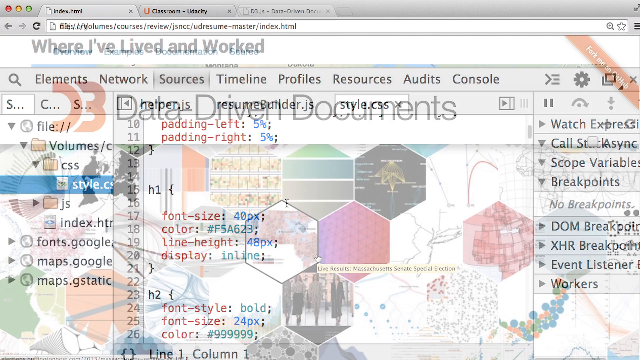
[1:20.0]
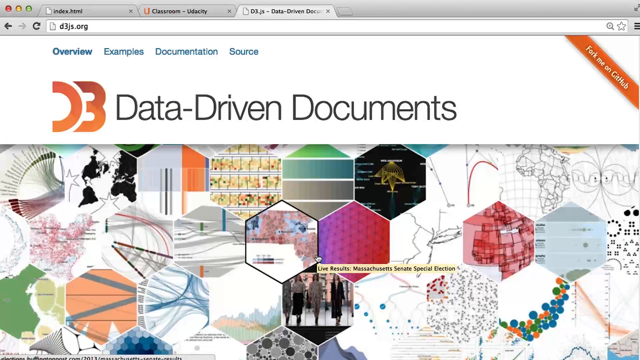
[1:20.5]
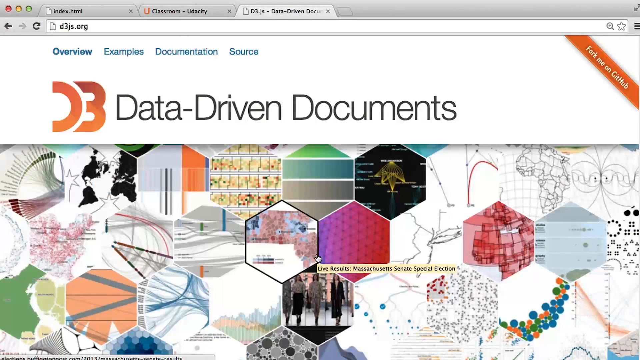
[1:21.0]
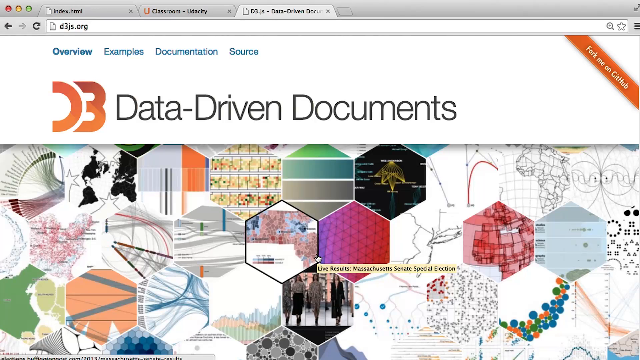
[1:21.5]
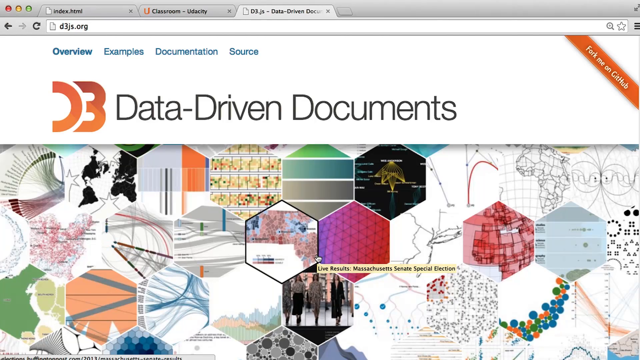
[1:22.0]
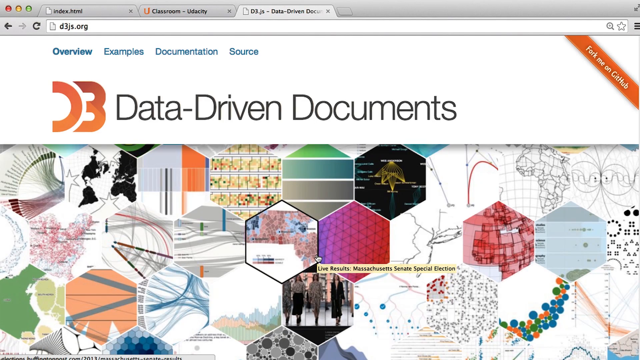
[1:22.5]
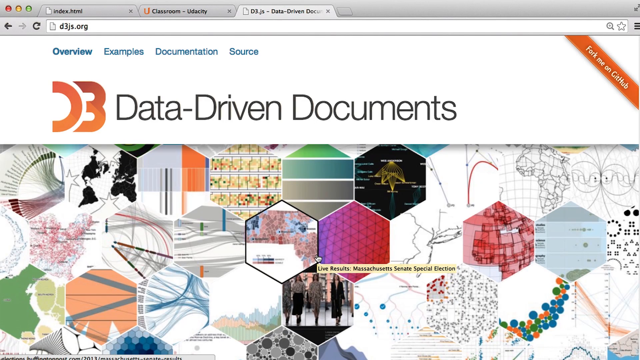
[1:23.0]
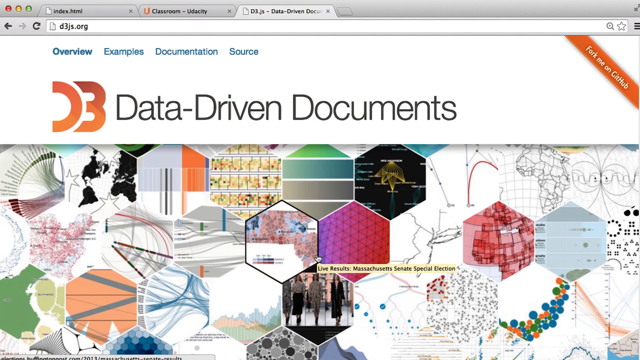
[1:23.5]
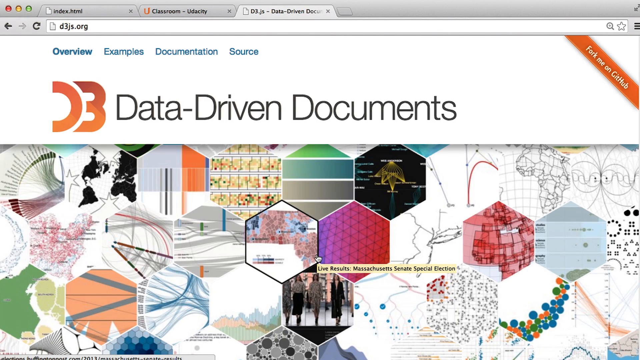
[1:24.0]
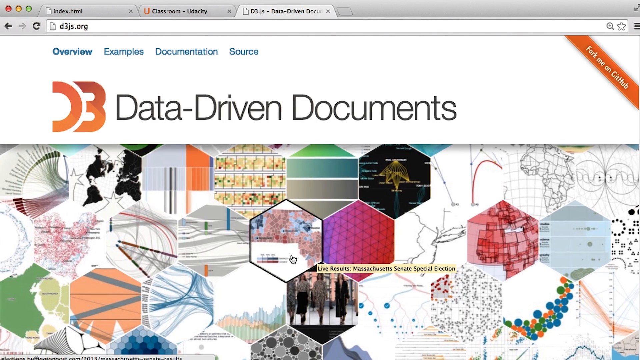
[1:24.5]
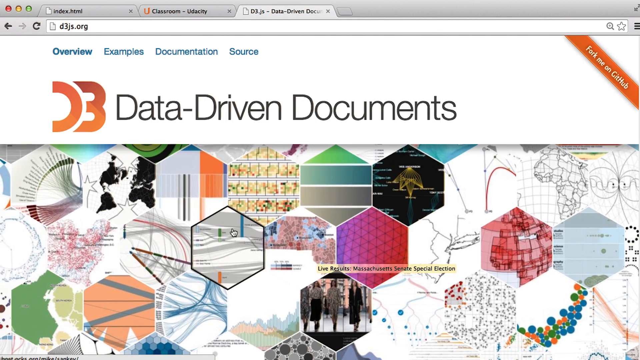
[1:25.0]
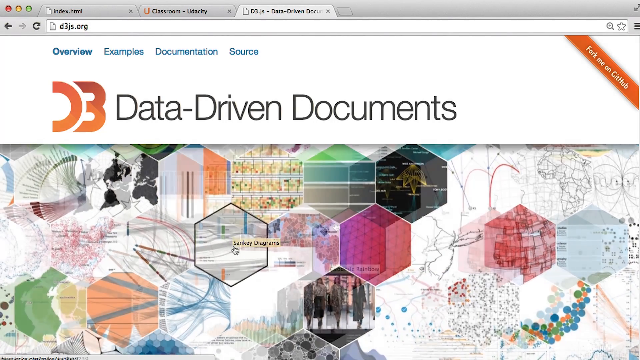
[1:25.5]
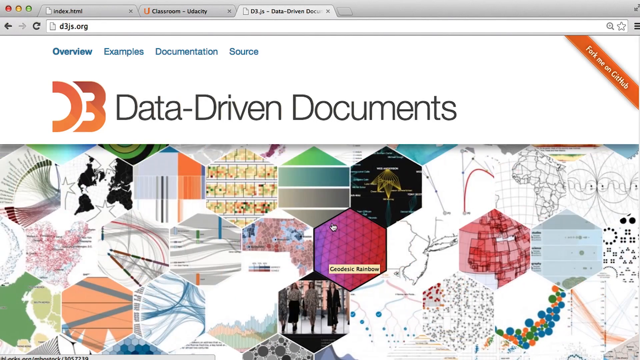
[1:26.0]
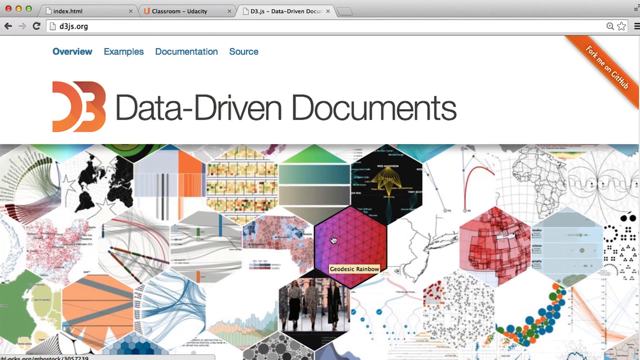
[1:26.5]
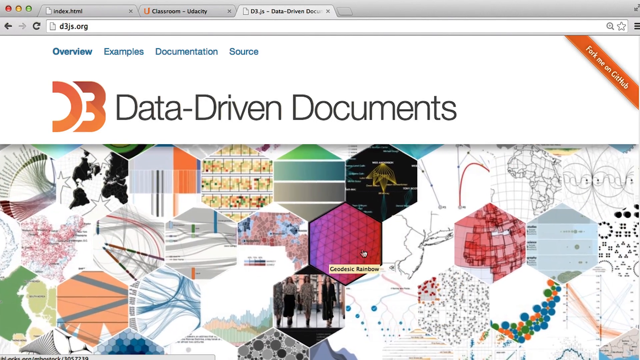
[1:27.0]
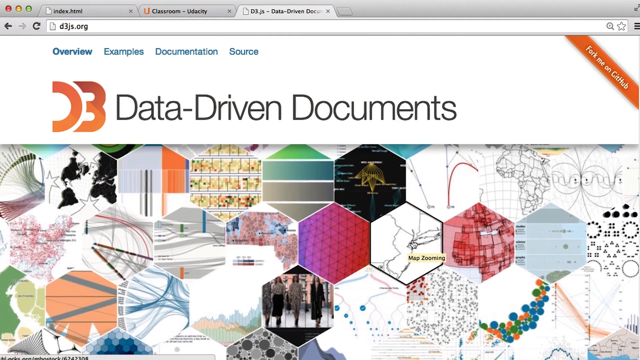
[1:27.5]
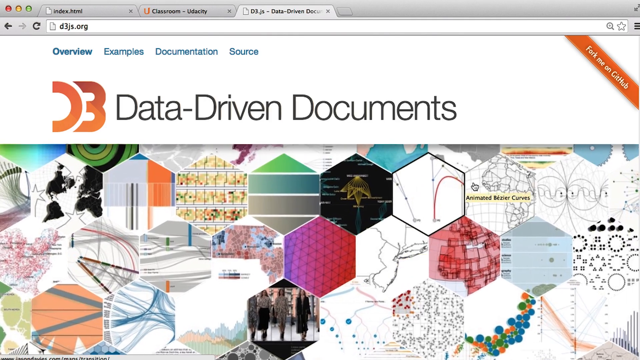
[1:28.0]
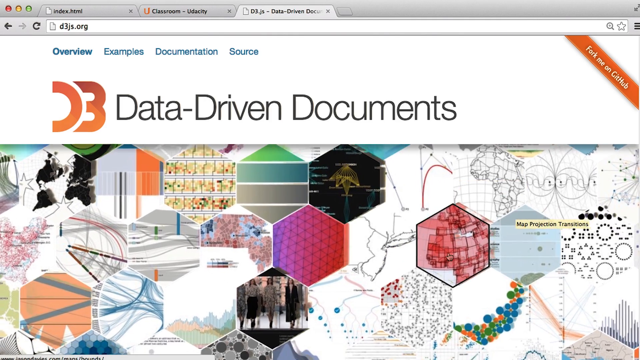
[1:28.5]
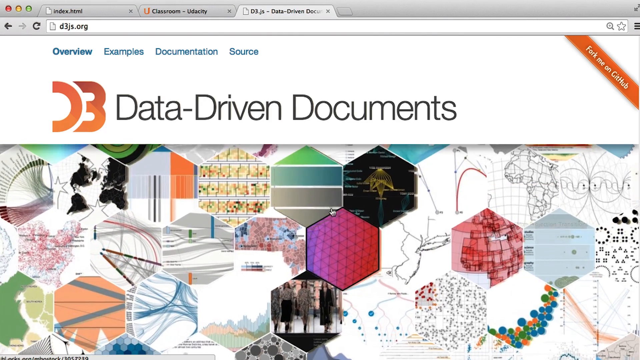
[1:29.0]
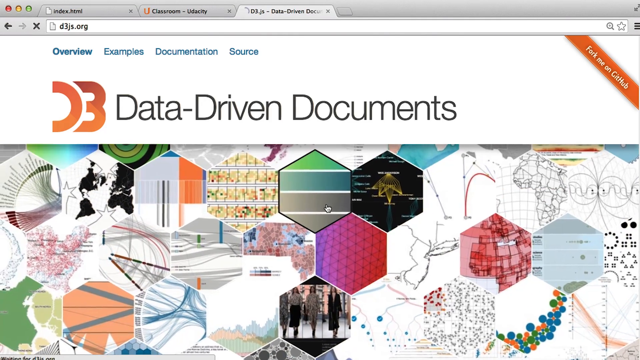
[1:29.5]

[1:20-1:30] A screen reads "data-driven documents", with a colorful image below it full of little shapes that are all the same shape but with different patterns. It appears to be a web page. The mouse moves around on the images, going between each one; as it moves between them they highlight and some information kind of pops up. It goes mostly between the shapes in the very center of the page.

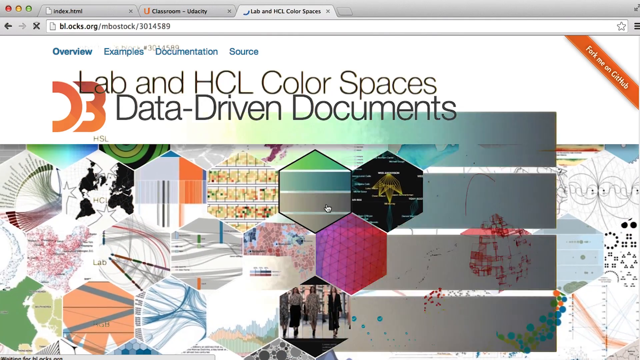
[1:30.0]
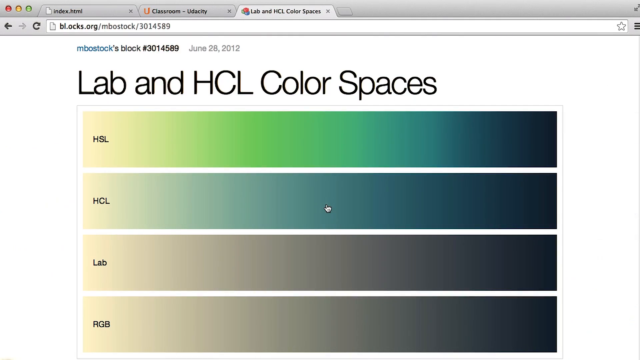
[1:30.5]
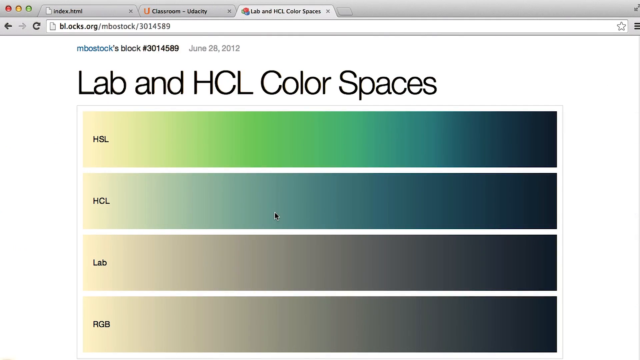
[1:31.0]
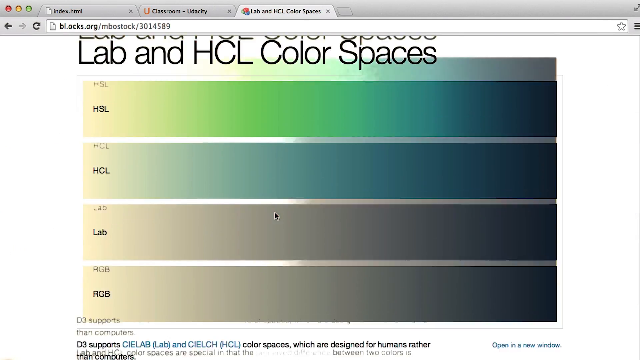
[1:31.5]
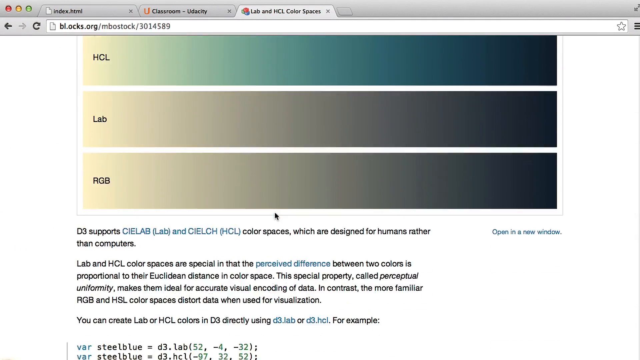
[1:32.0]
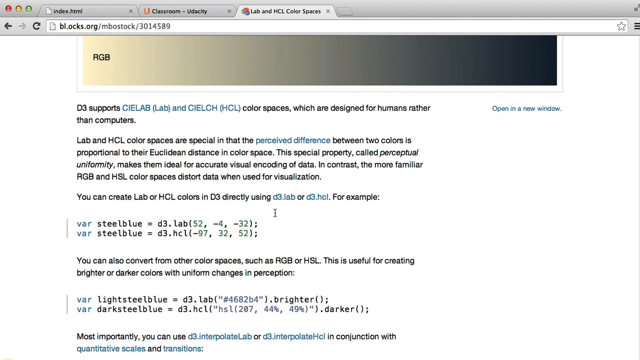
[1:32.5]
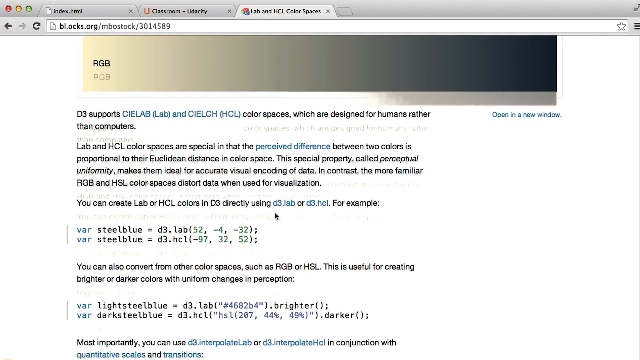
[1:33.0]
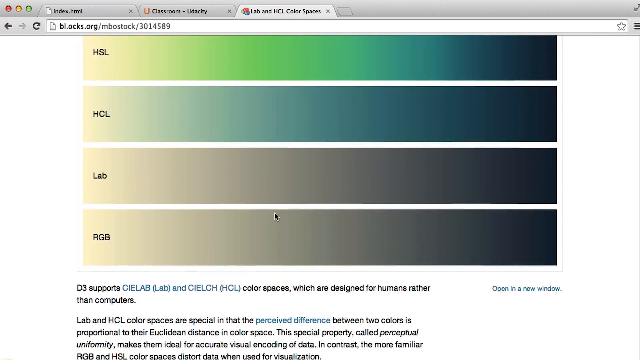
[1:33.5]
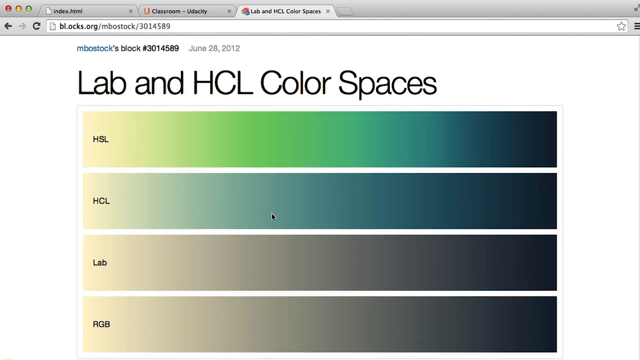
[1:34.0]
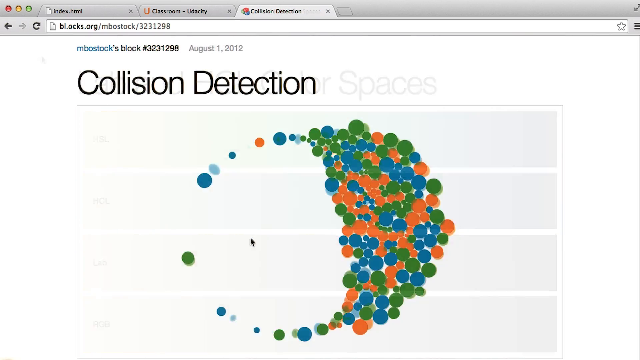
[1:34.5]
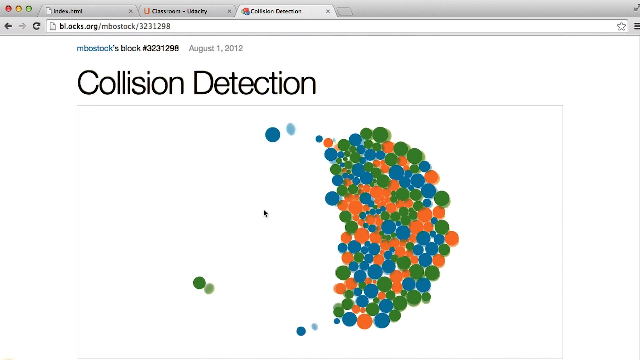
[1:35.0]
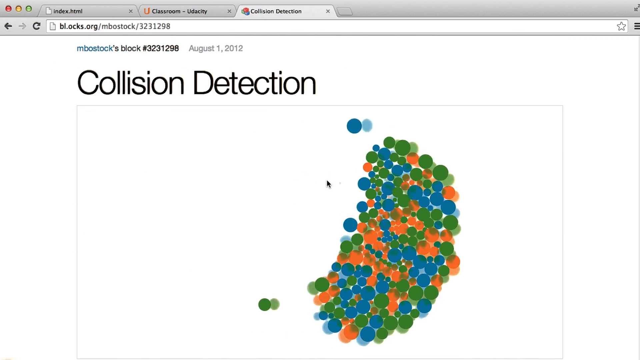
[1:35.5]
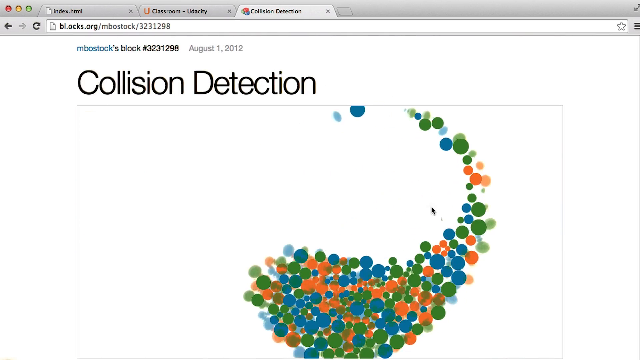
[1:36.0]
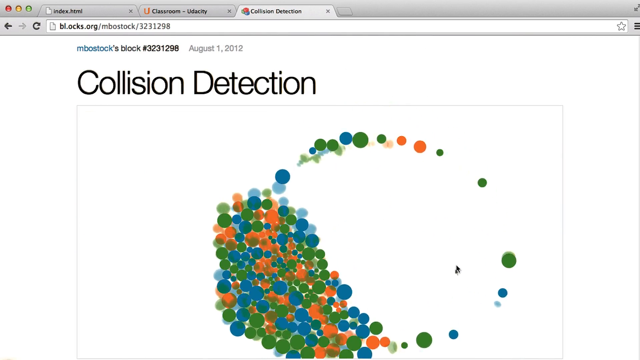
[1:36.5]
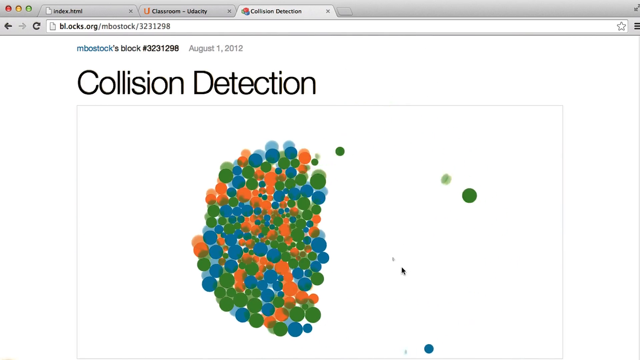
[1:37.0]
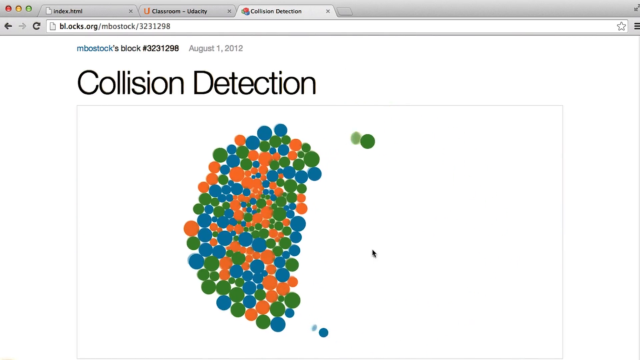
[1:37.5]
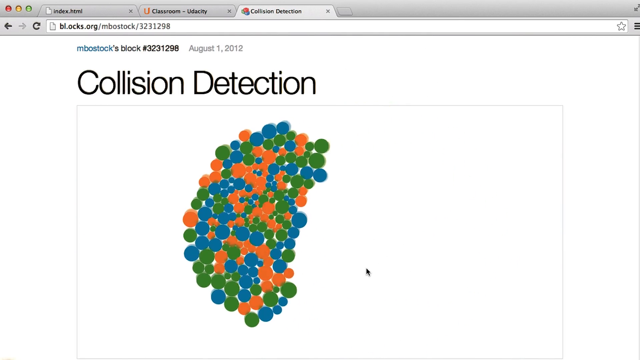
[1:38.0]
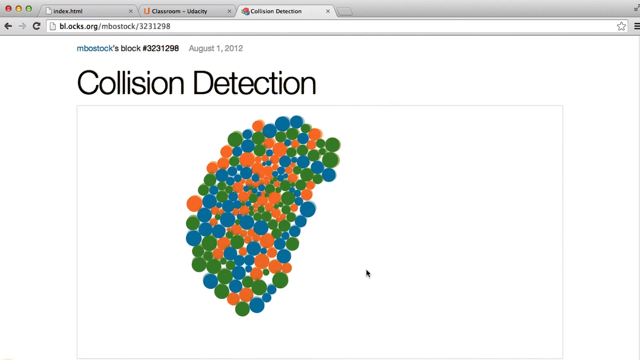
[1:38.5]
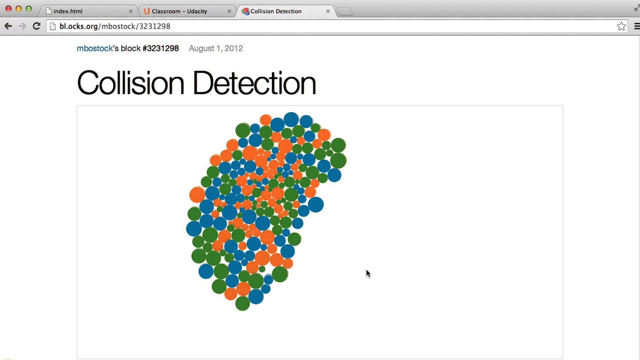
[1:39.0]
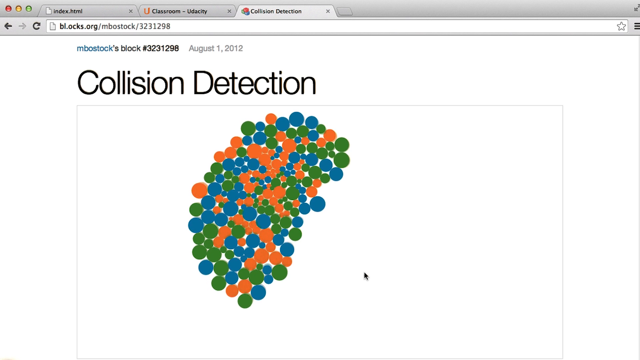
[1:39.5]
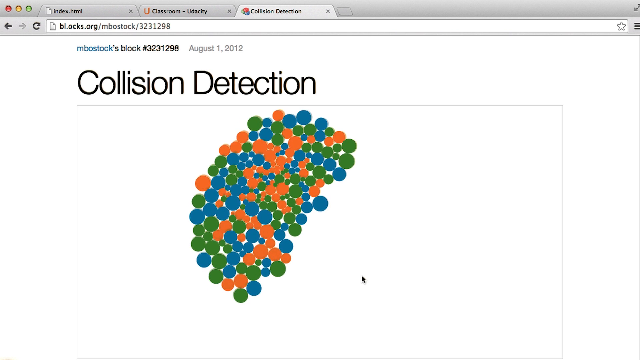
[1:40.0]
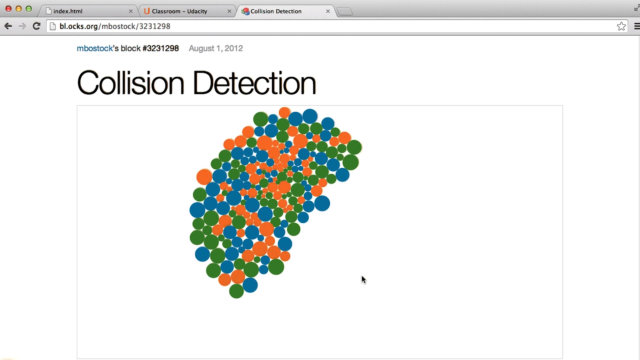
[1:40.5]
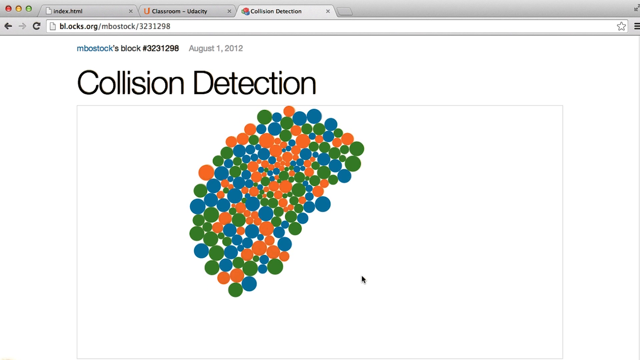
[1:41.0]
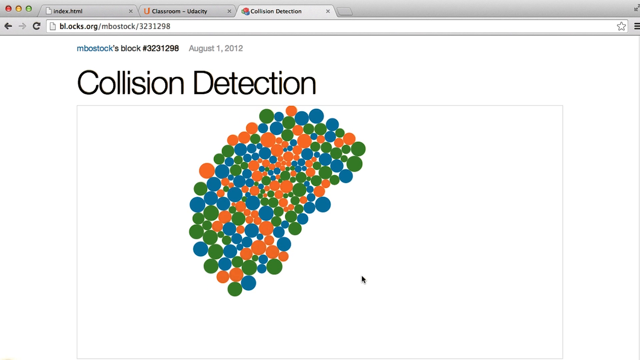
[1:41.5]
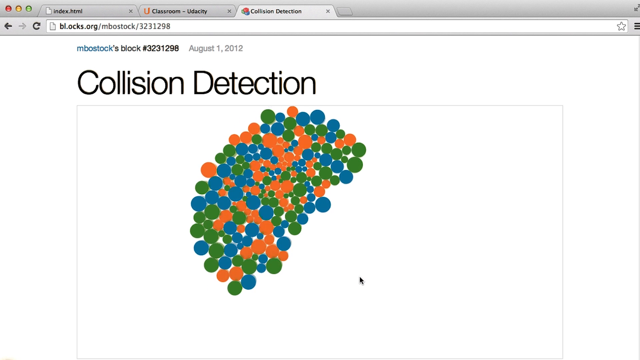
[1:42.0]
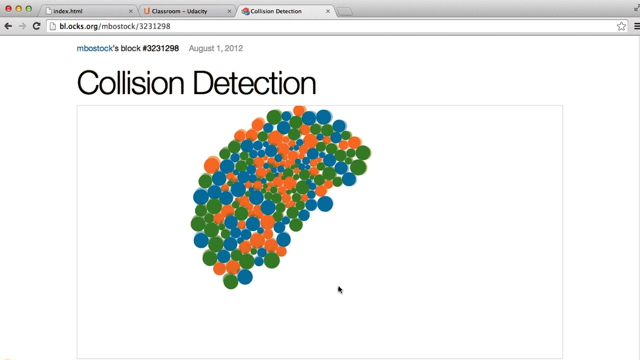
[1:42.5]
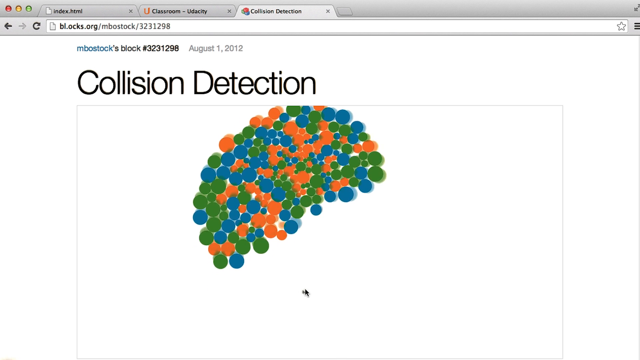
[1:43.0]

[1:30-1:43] A web page reads "lab and HCL color spaces" at the top and then "data driven documents". It flashes to a new web page reading "lab and HCL color spaces", showing different colors that each have an assigned three-letter combination, ranging from green to kind of brown. The page scrolls down and then back up. Once it scrolls back up, a wave of dots appears, swirling together in a section called "collision detection". The dots are kind of grouped together, colored blue, green and orange, and they seem to react and kind of move away from the mouse.